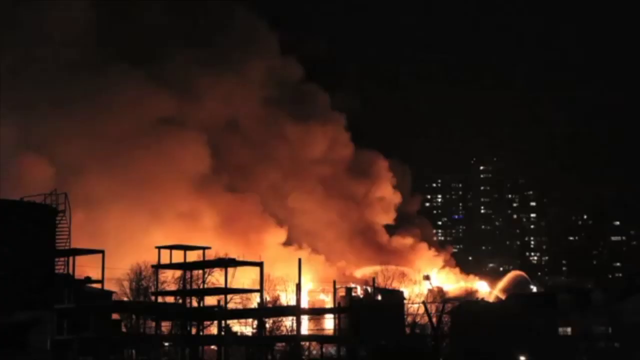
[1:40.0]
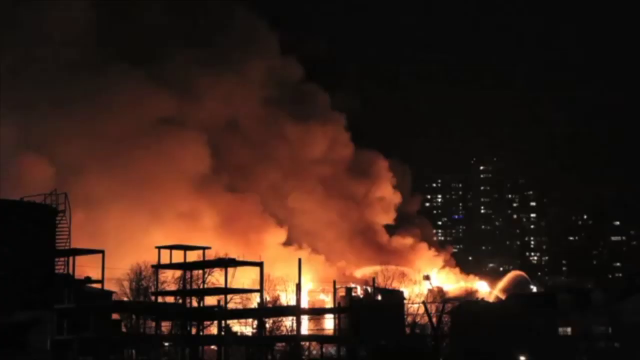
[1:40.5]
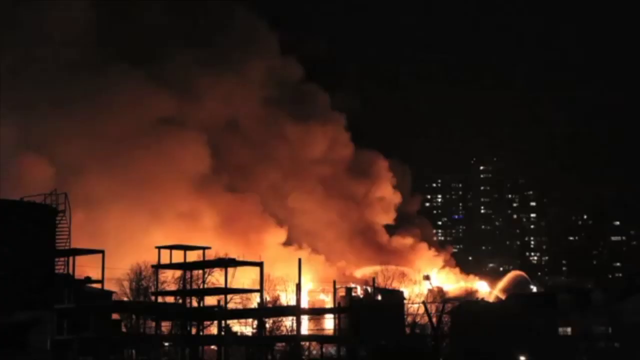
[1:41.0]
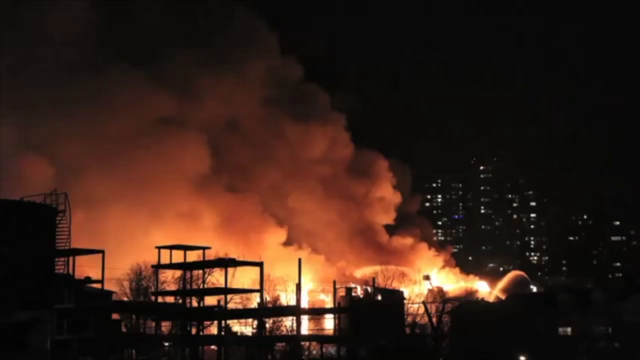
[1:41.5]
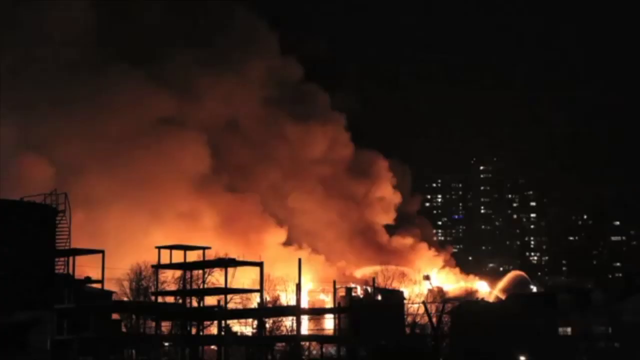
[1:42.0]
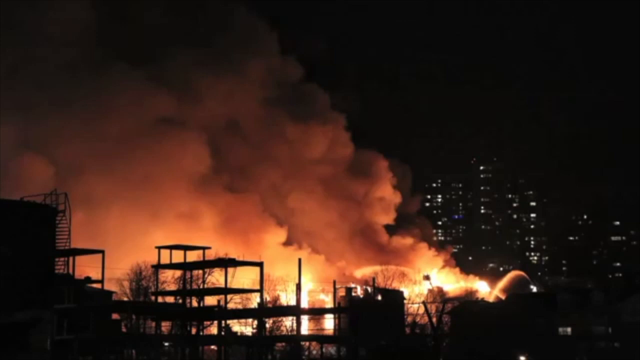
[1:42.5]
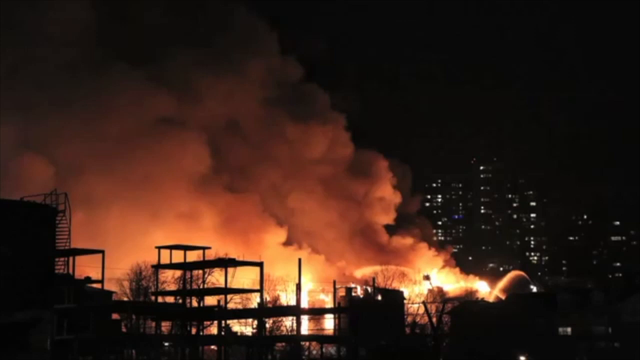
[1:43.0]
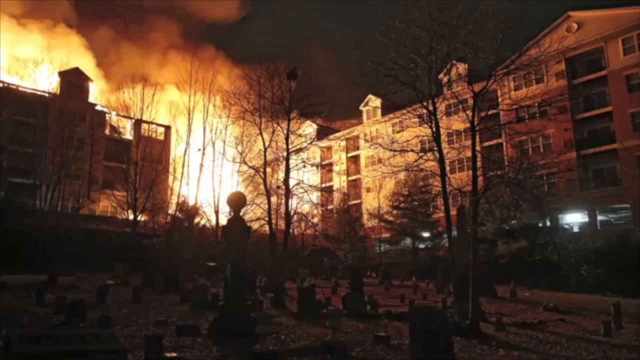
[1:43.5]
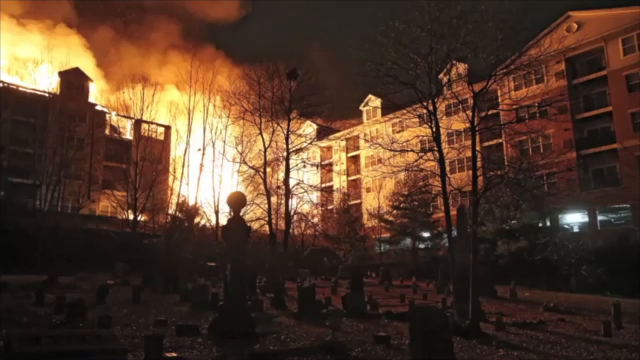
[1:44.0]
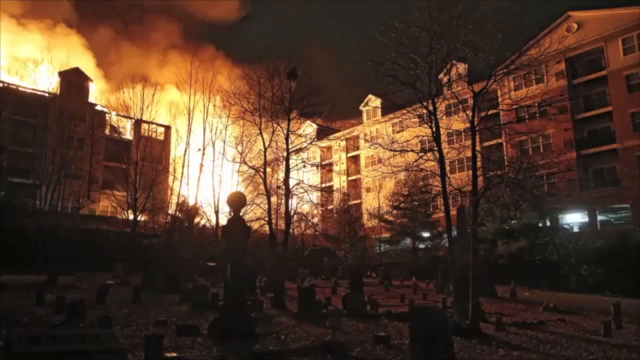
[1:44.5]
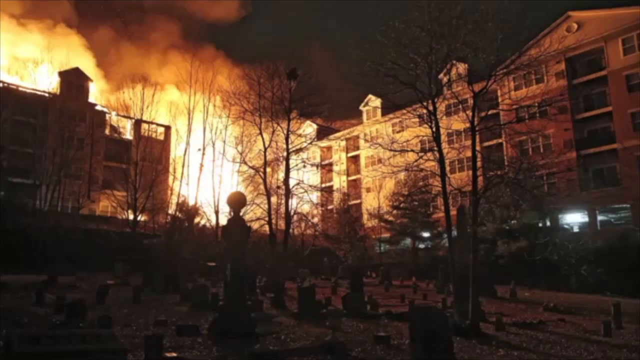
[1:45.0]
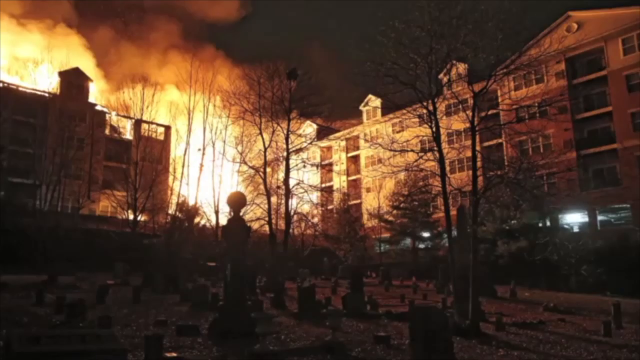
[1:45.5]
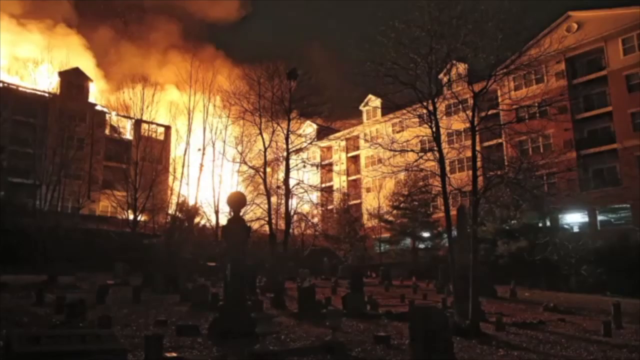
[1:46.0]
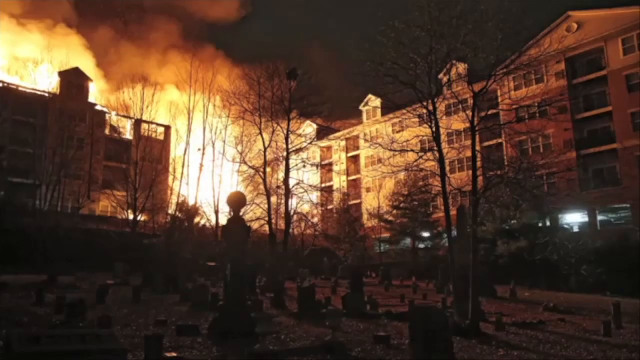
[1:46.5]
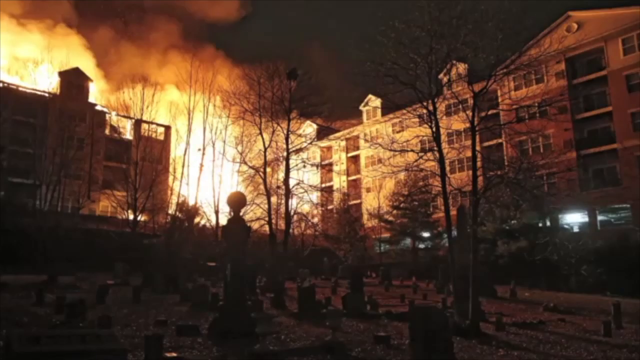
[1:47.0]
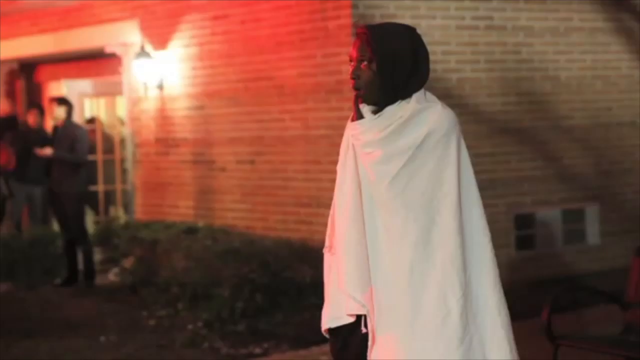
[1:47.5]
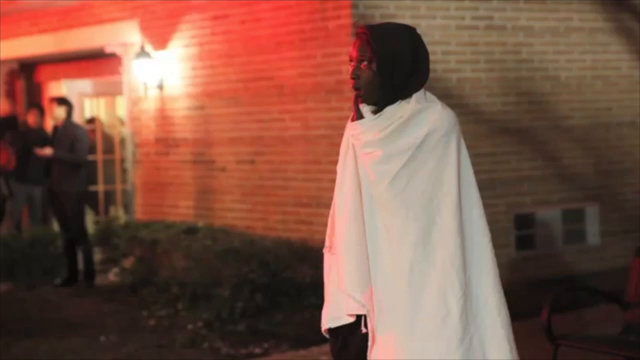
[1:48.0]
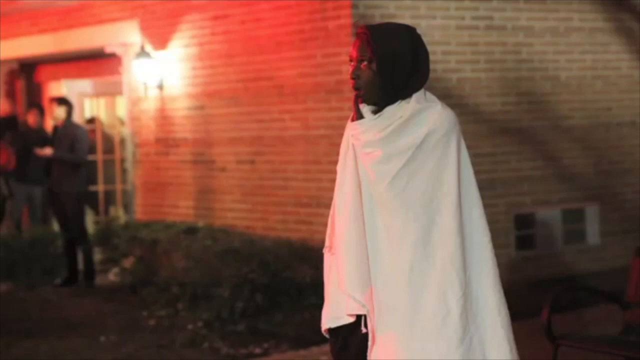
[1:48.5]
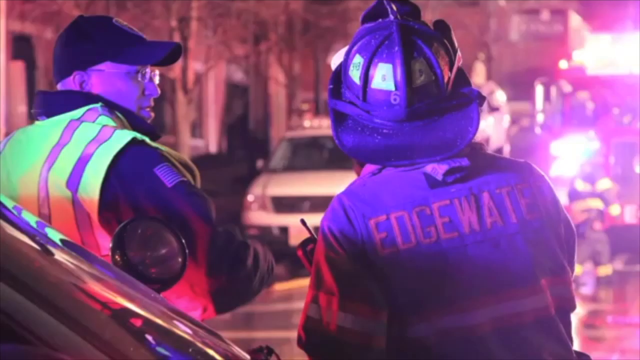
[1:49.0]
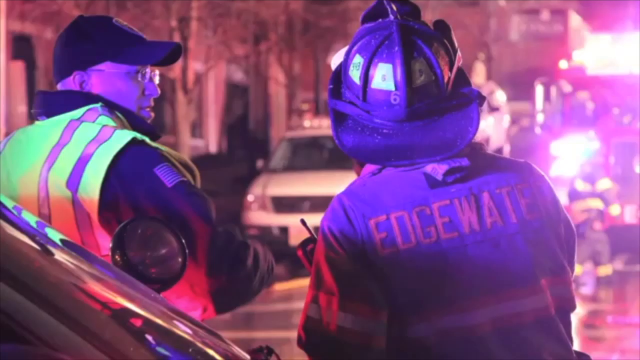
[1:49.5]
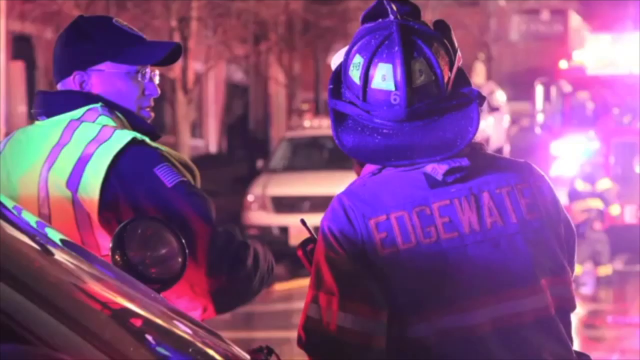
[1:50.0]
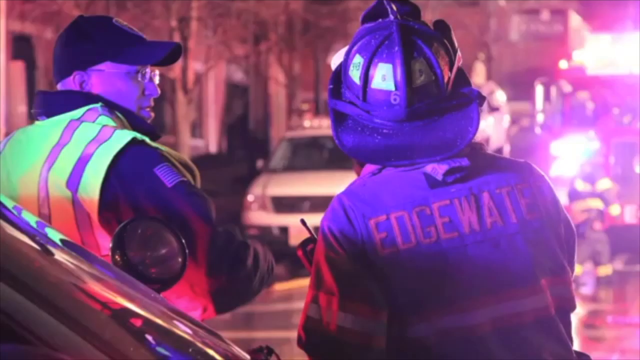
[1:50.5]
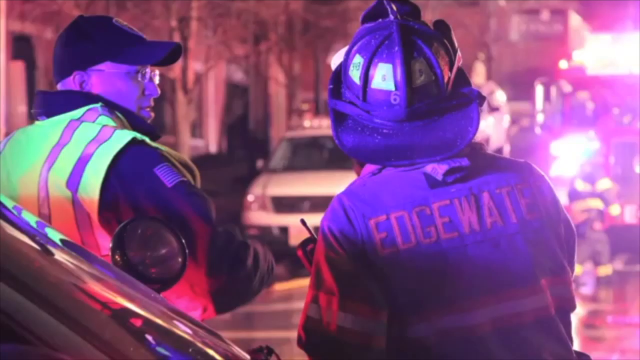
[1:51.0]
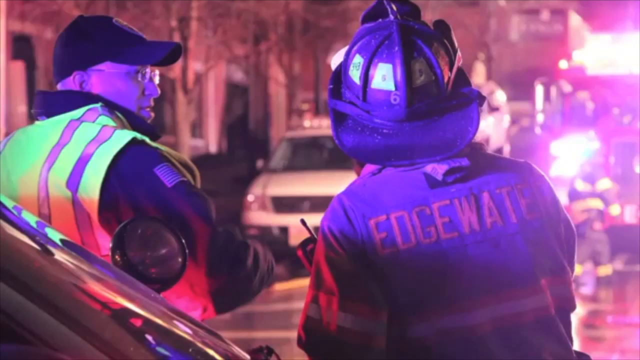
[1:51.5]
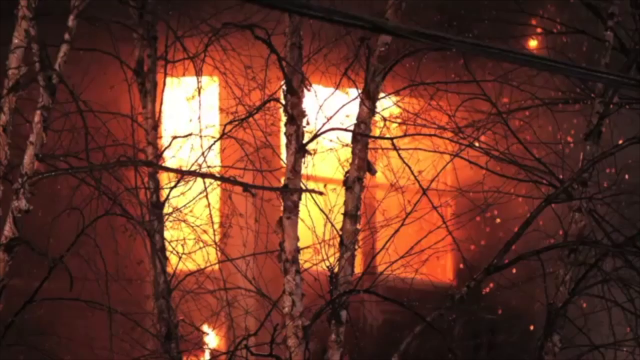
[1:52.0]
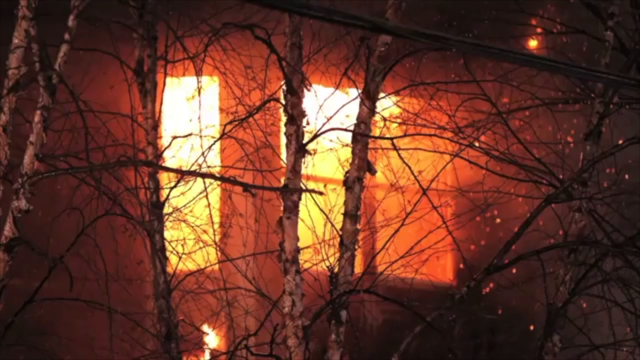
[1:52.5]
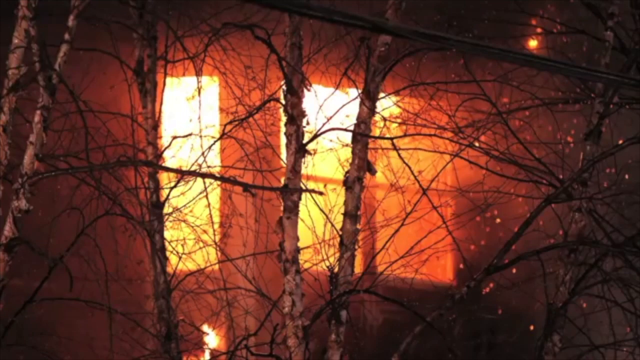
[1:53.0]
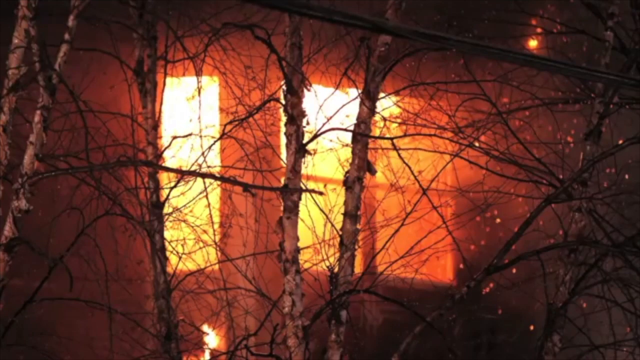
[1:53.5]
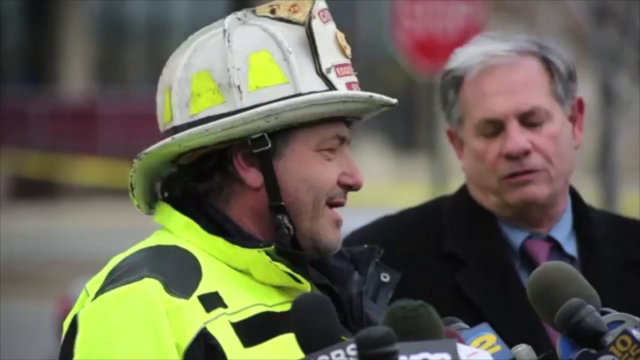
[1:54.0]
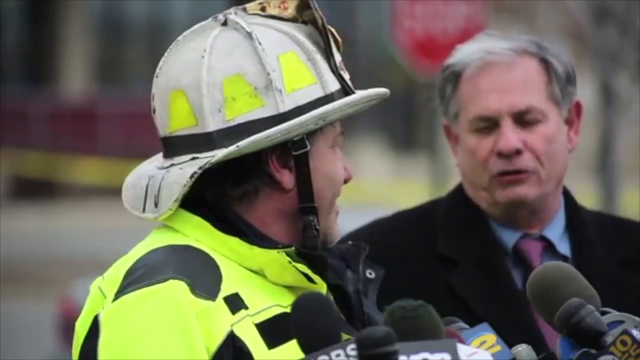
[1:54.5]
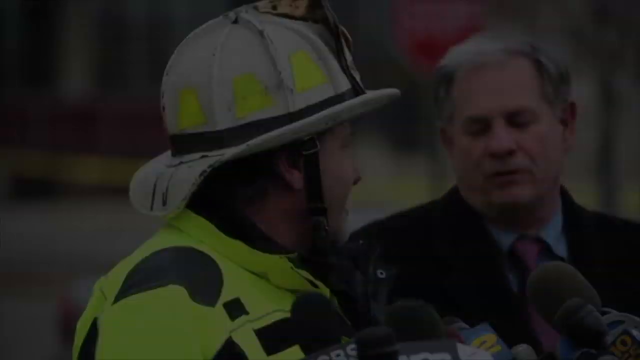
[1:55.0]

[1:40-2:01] A shot from the ground shows the fire still going; the first couple of shots are still pictures of the fire. The third is a picture of a woman who appears to have been rescued from the fire. She has a white blanket around her body, and there are people on her left side. Next is a picture of two firefighters. The one on the left wears a safety jacket, glasses and a hat. The one on the right has a hard hat on, his jacket says "Edgewater" on the back, and the edge of a walkie talkie is visible on him. The next shot shows the fire burning in a building behind some trees. The video then goes back to the man who was talking to the cameras and fades to black for the last few seconds.